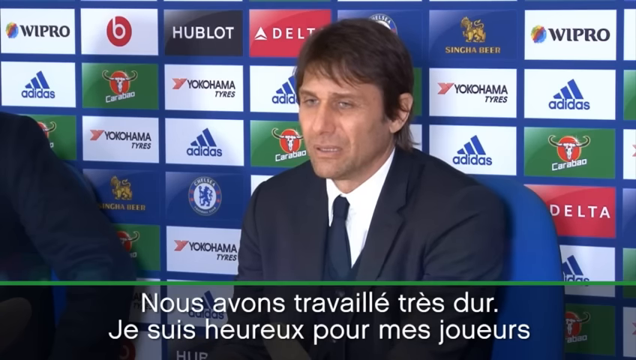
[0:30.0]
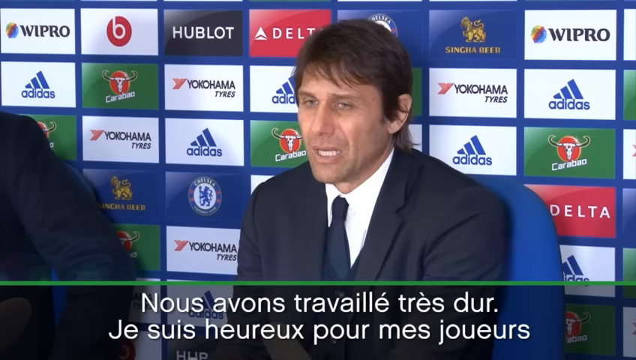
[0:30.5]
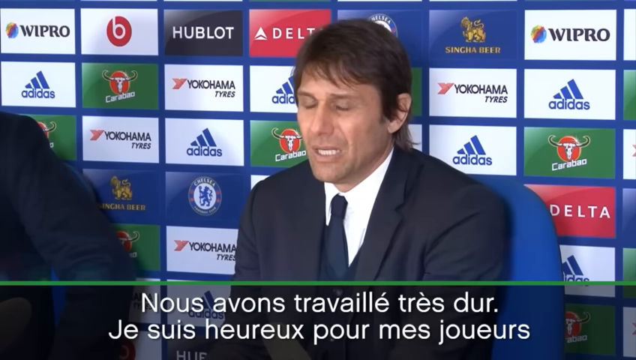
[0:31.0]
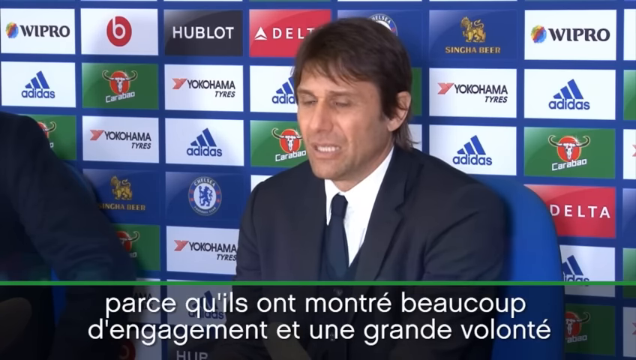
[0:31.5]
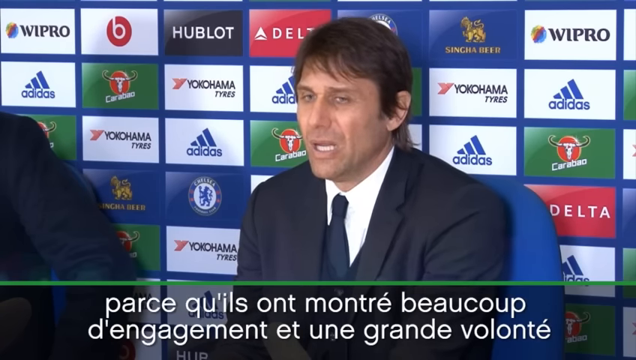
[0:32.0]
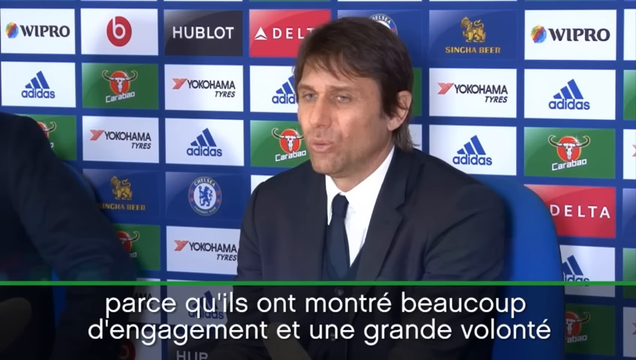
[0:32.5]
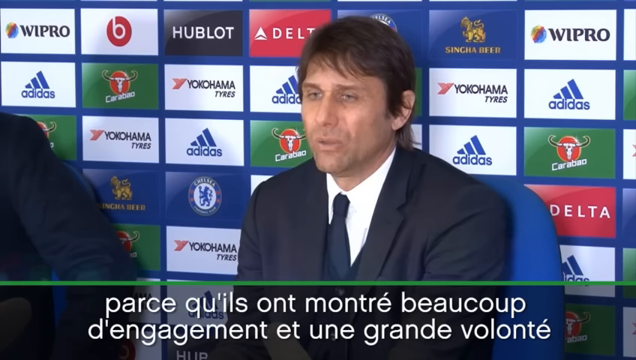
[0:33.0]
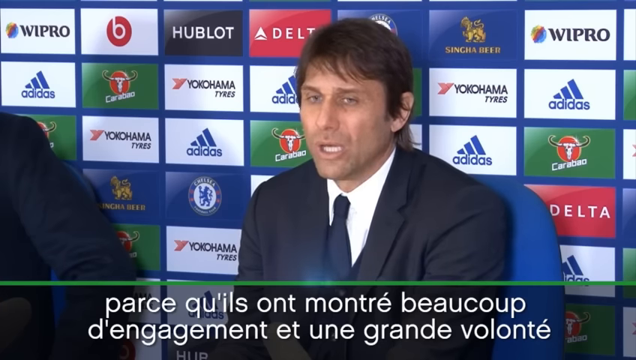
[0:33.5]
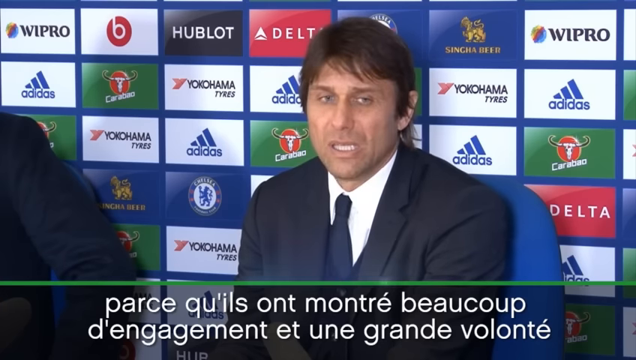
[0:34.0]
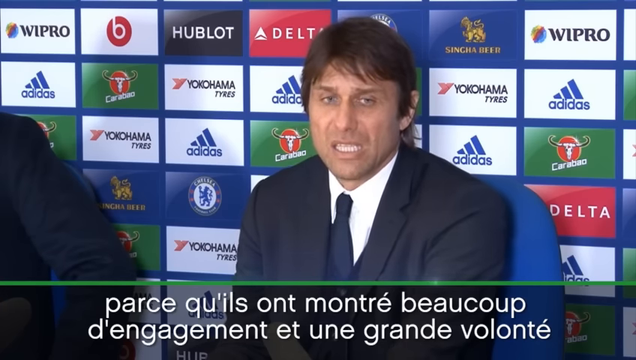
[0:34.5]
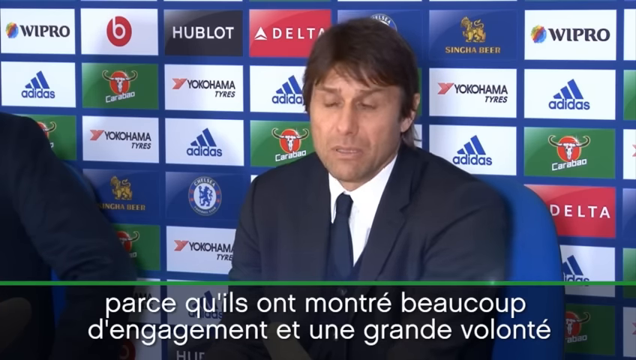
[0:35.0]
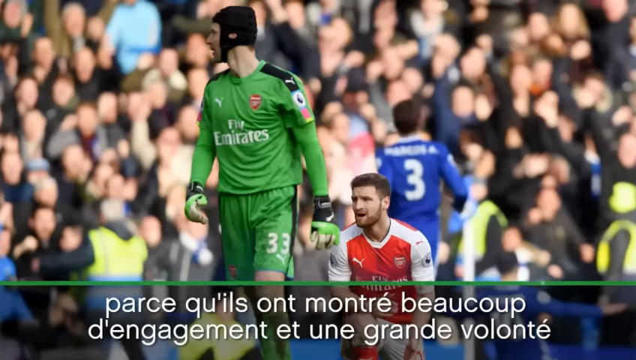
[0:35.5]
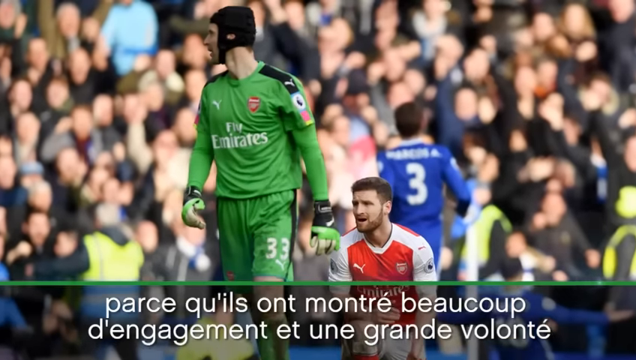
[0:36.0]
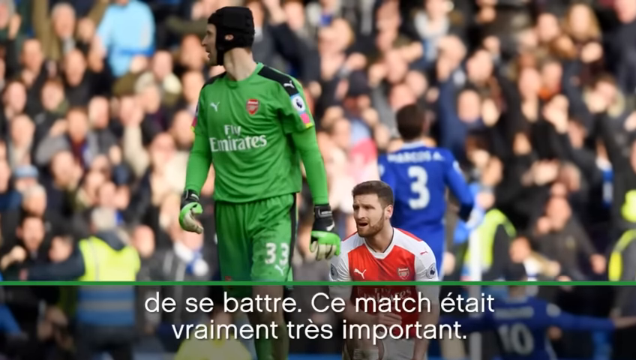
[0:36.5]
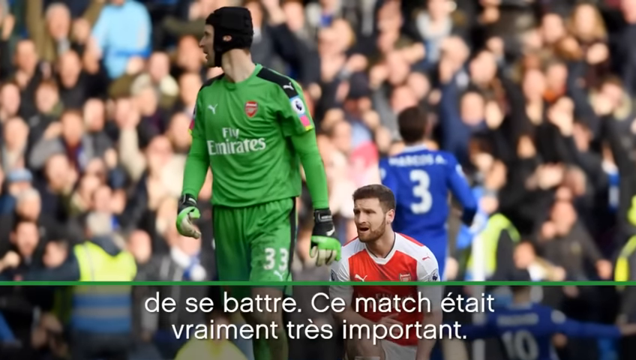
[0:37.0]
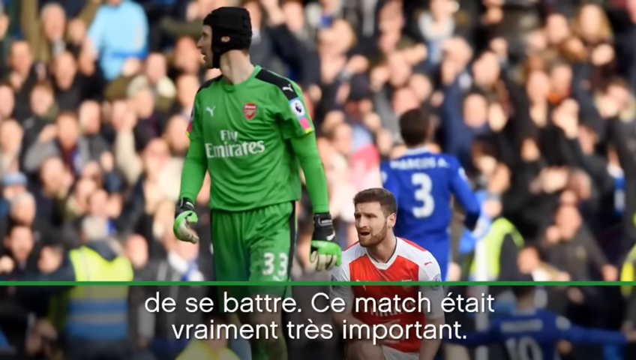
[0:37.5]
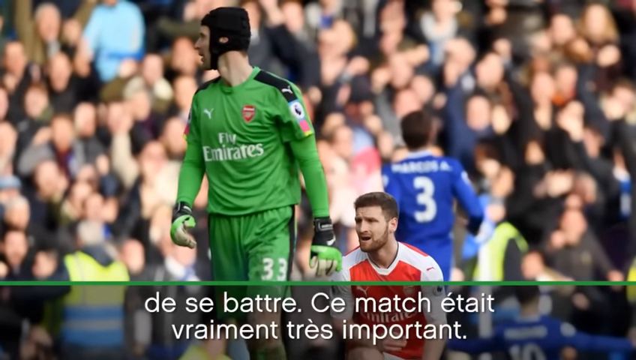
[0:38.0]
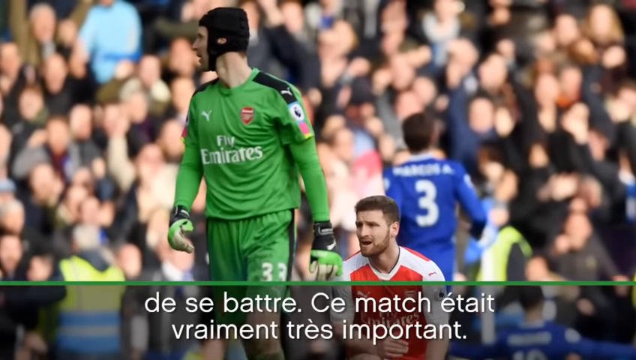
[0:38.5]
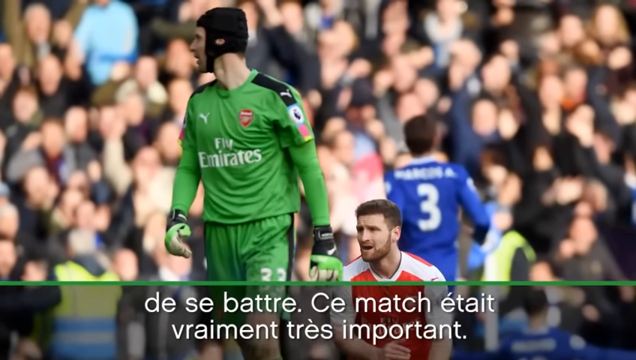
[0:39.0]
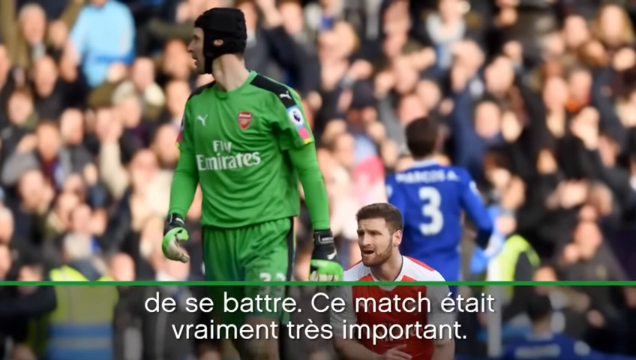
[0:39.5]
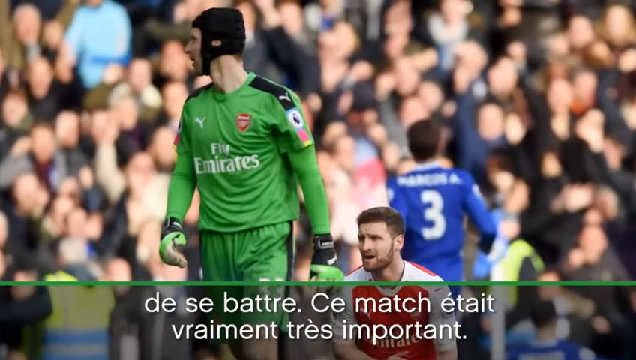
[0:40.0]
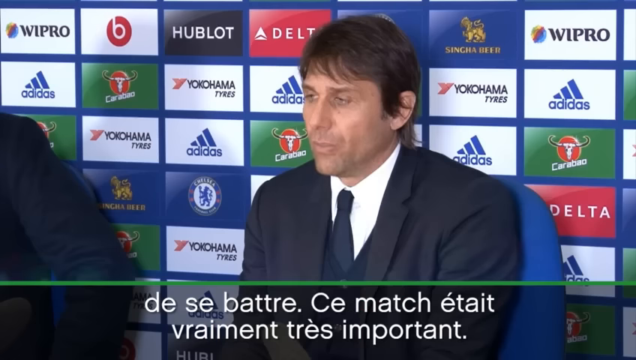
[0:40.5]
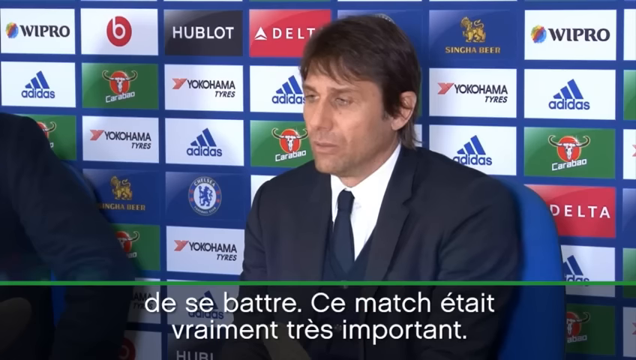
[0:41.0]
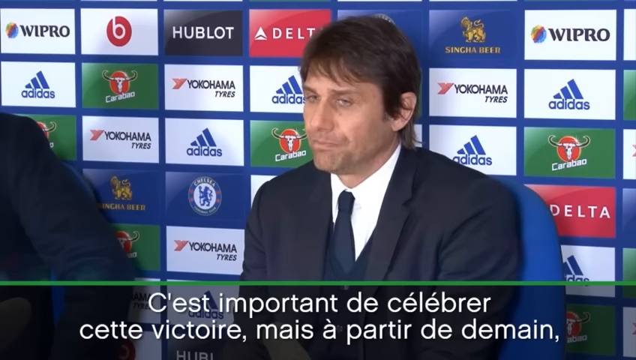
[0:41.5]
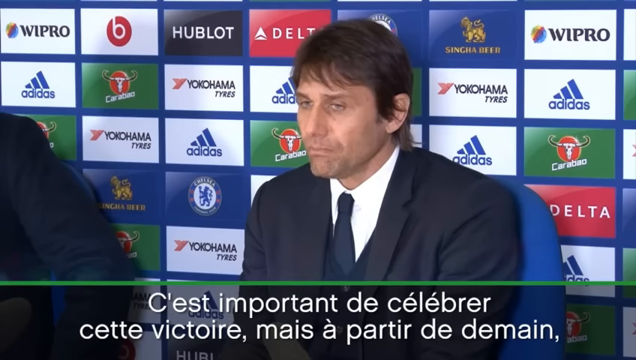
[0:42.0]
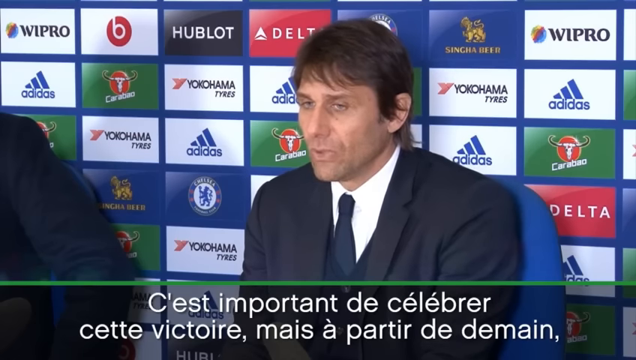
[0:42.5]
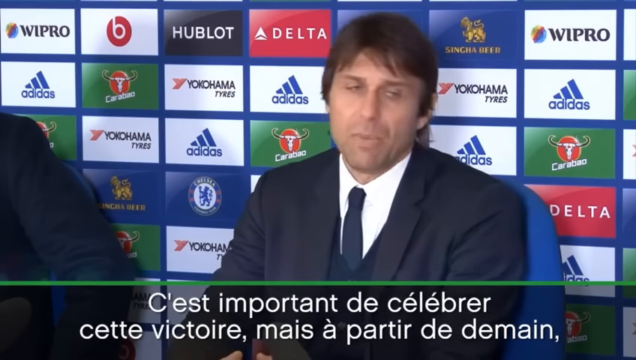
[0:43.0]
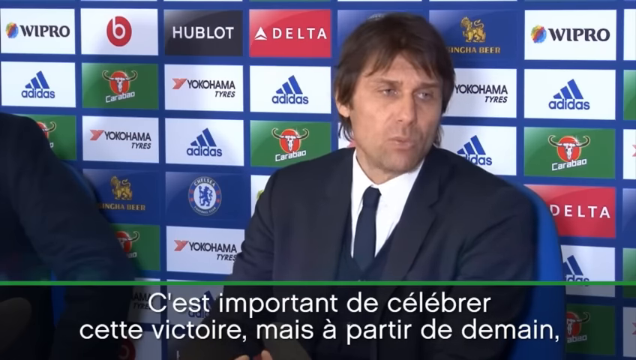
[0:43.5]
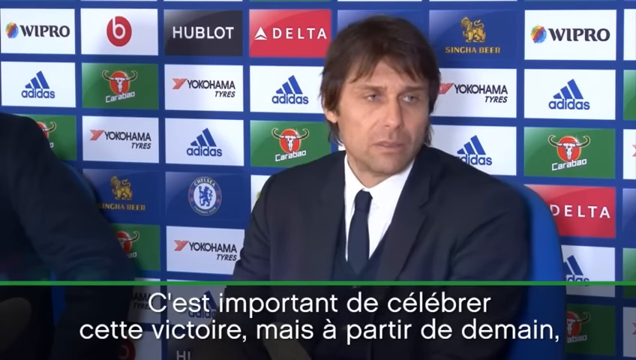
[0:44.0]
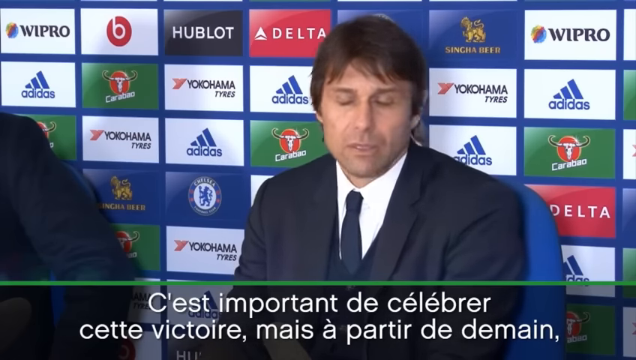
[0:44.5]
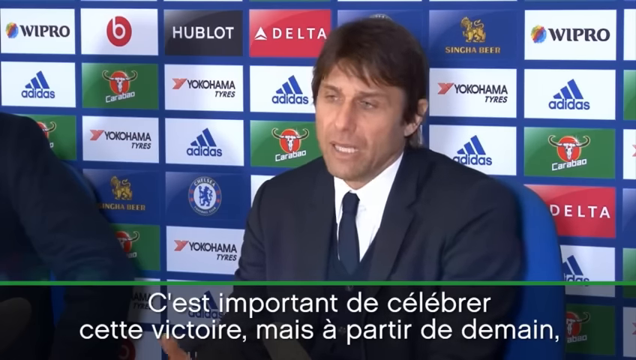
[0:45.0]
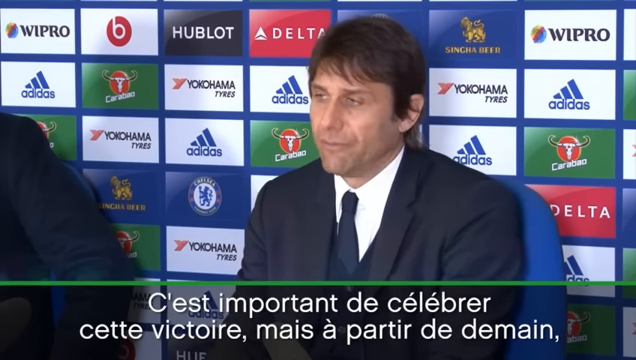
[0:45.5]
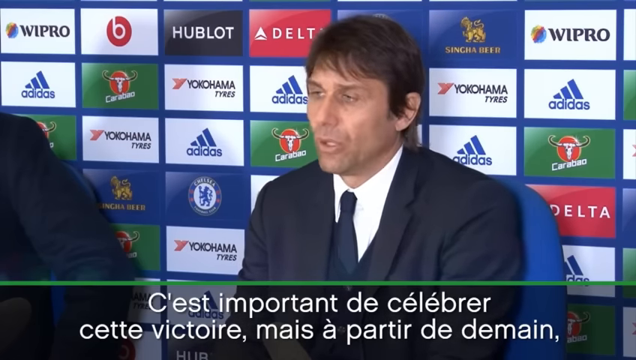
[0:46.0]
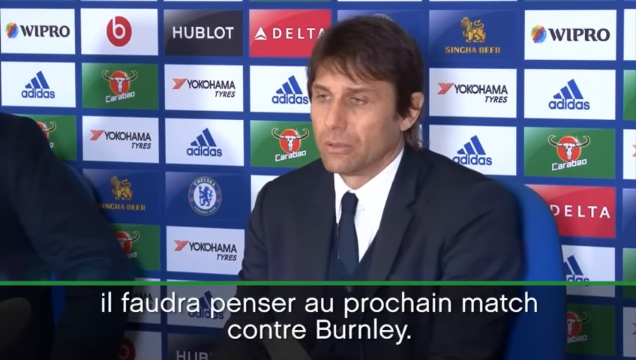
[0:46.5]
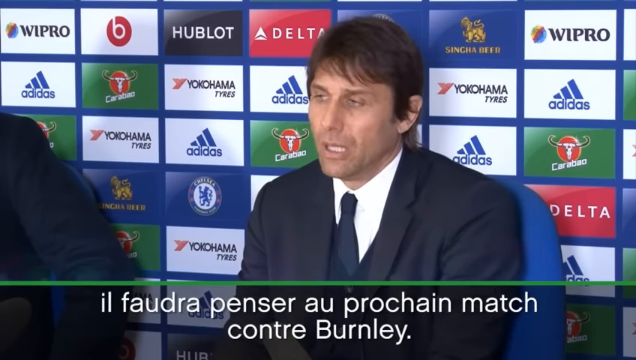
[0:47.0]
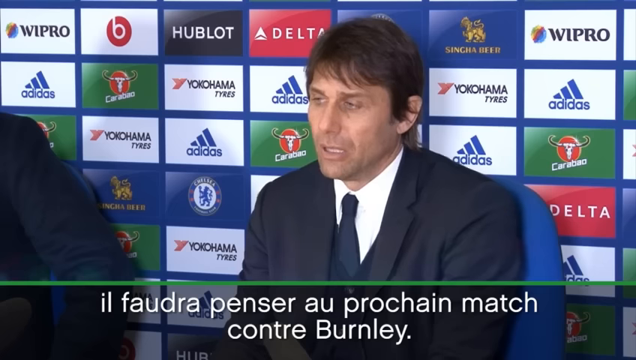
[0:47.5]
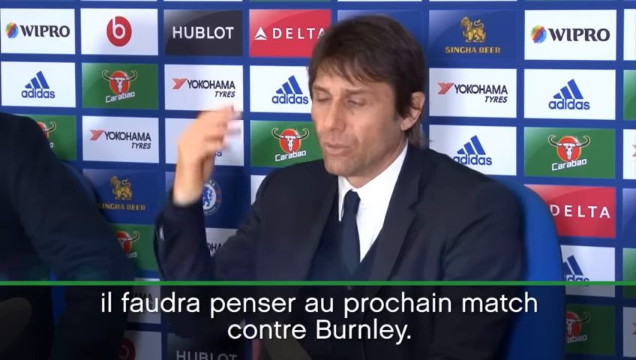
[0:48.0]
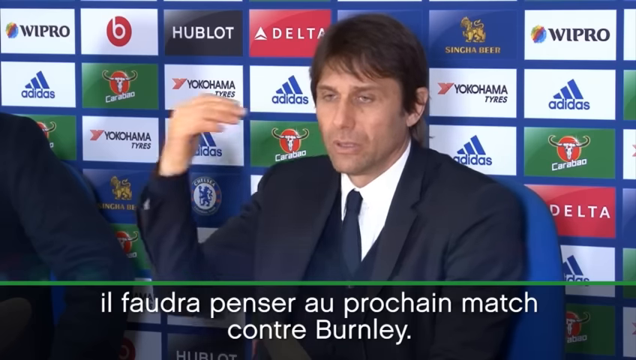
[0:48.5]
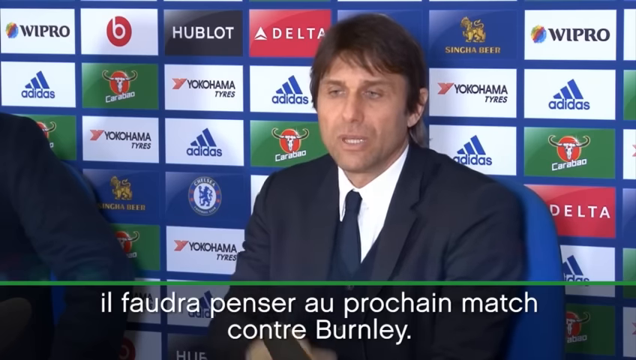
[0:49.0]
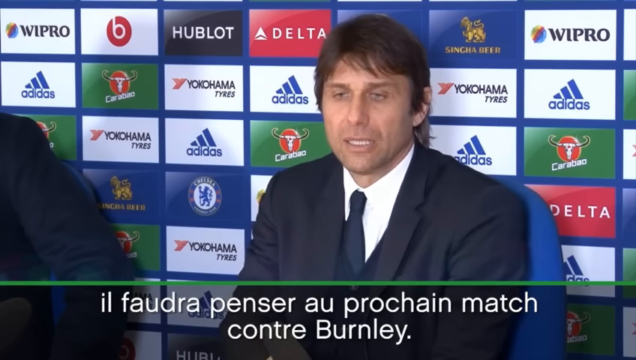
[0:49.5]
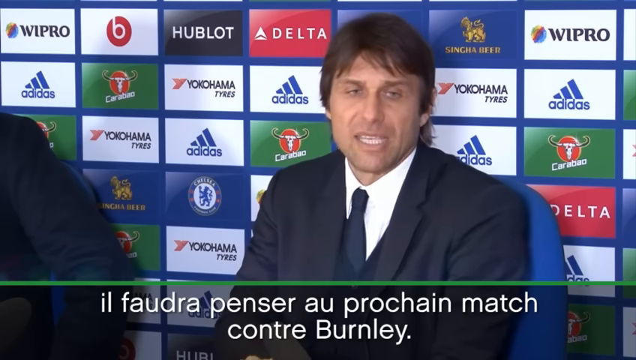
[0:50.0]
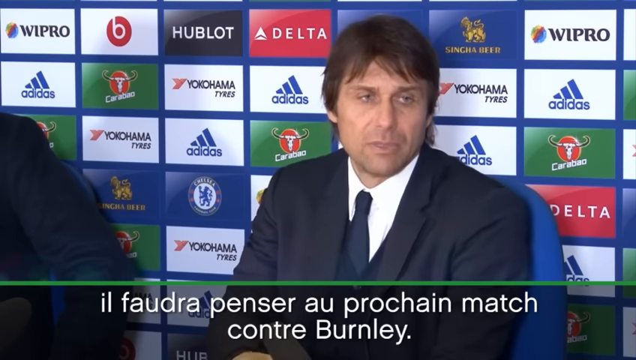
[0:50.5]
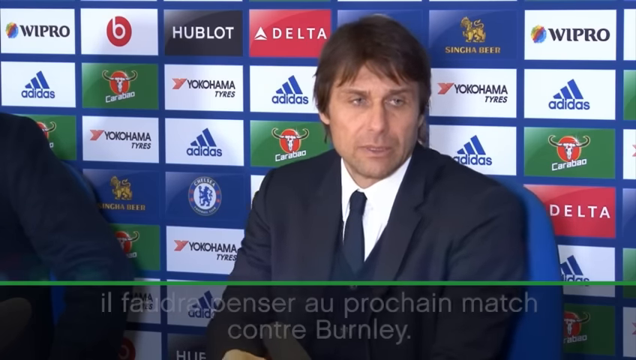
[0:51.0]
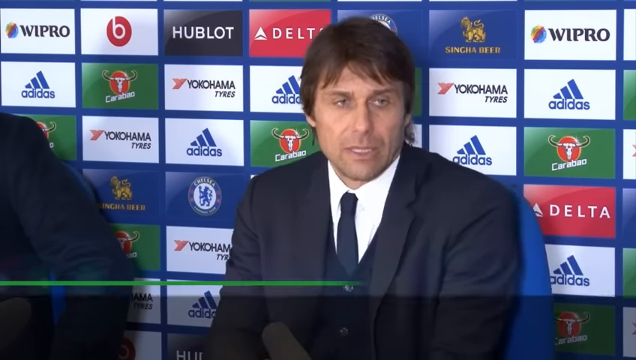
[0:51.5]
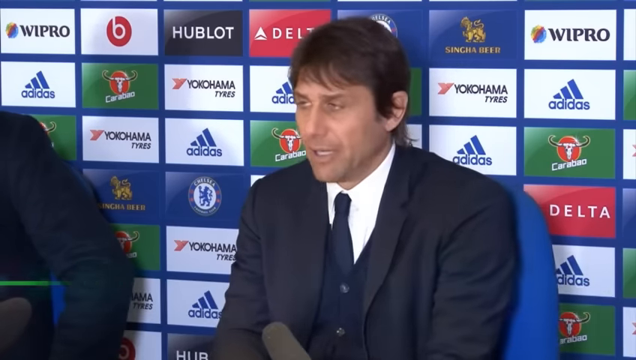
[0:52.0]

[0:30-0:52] The shot returns to the man in the black and white suit, who can now be seen sitting in a blue chair with a microphone in front of him. Someone in a suit is next to him, only part of their body visible. As the man is still talking, the screen changes to a shot of a man in a green uniform, with a black cloth around his head and gloves on, walking across the field. Behind him the man in the red and white uniform is kneeling on the ground, and behind him one of the men in the blue uniform is walking with his back to the camera. Behind all of them is a bleacher full of people, probably at least 200. The shot then reverts to the man in the suit sitting in the chair talking to a crowd of people; he looks very concerned.